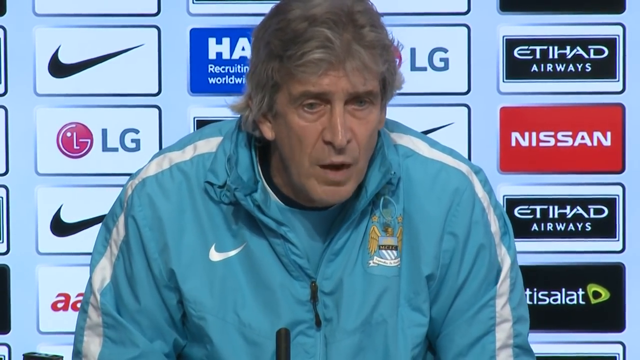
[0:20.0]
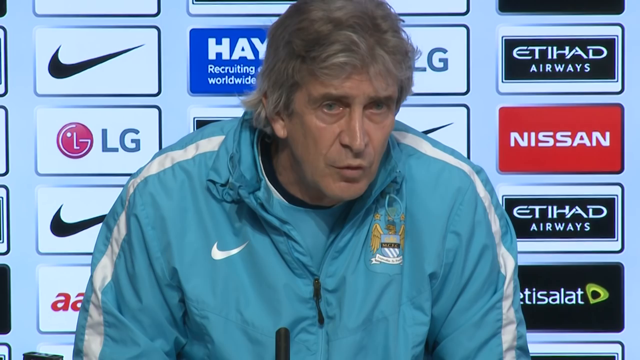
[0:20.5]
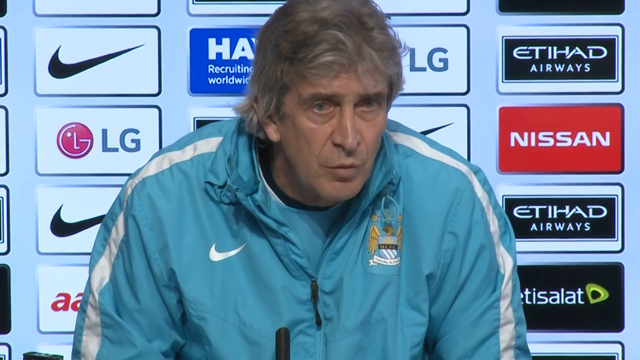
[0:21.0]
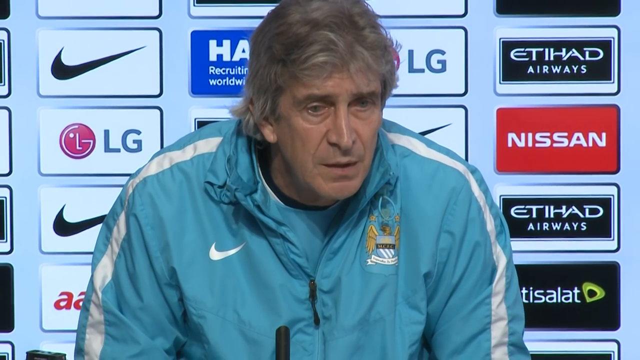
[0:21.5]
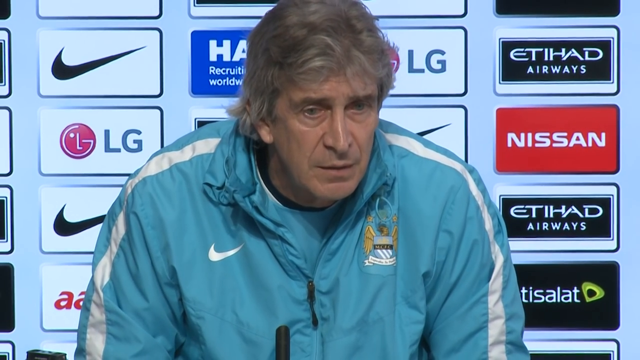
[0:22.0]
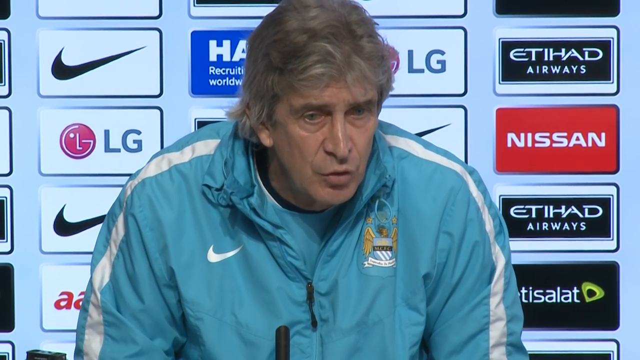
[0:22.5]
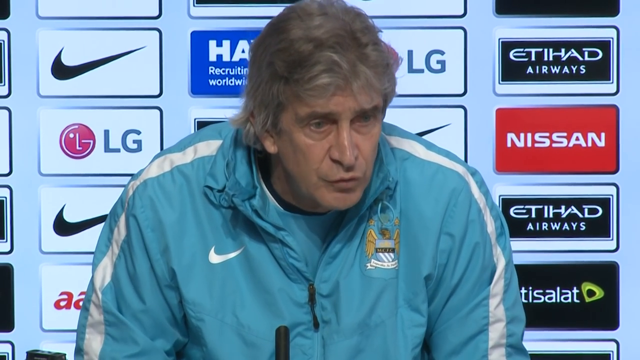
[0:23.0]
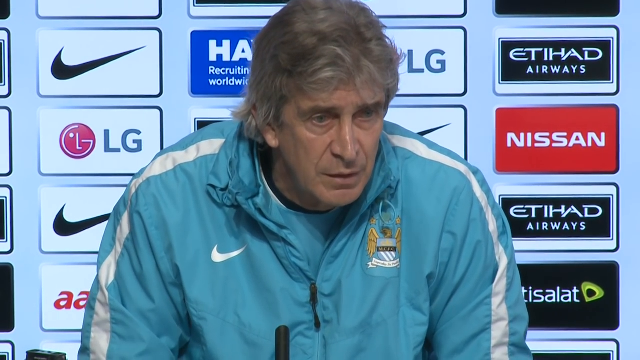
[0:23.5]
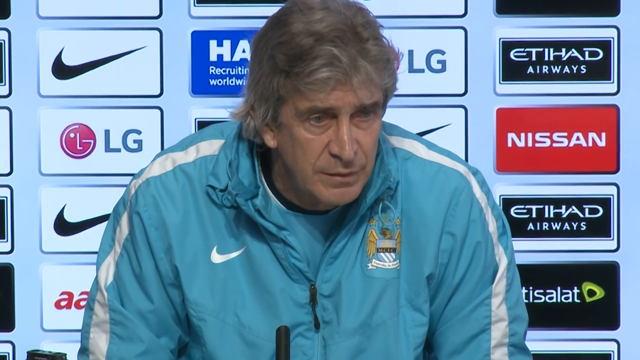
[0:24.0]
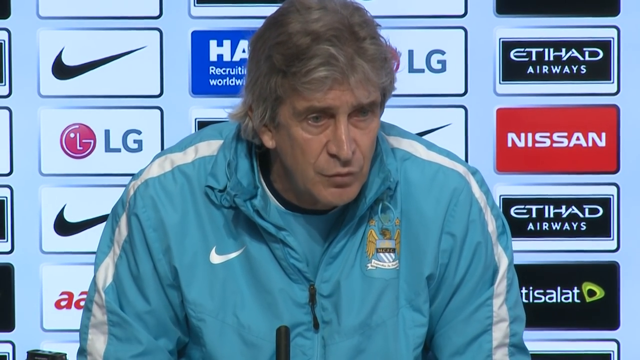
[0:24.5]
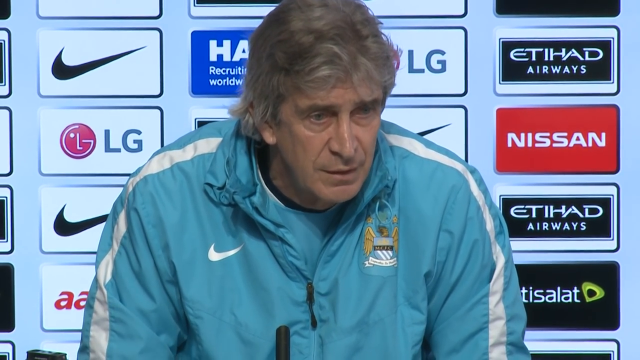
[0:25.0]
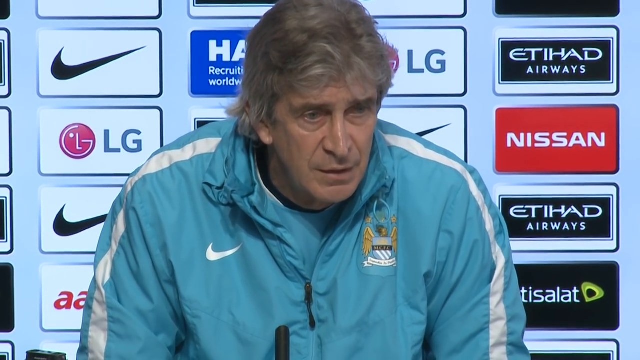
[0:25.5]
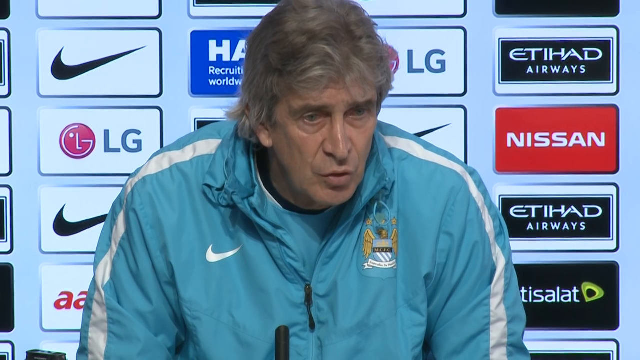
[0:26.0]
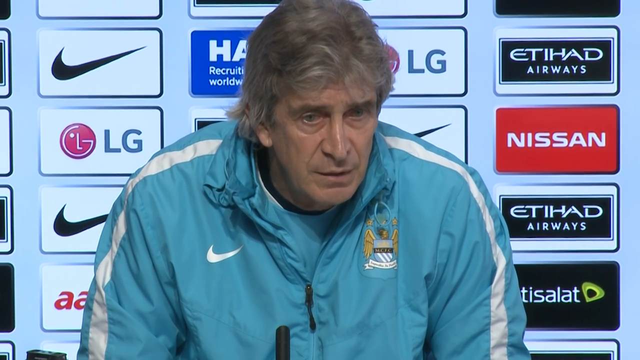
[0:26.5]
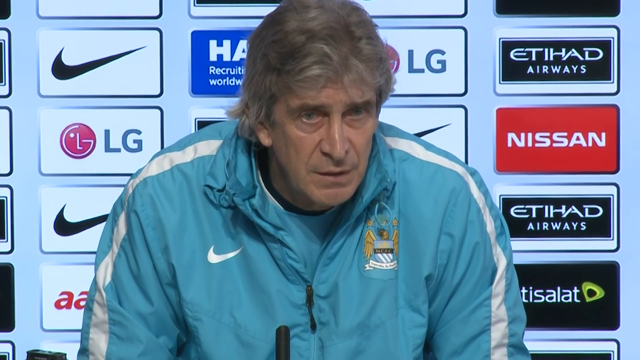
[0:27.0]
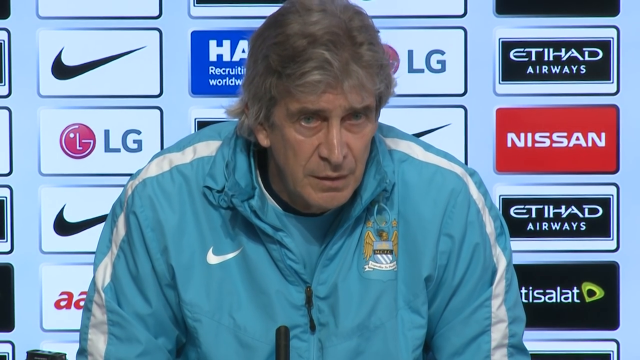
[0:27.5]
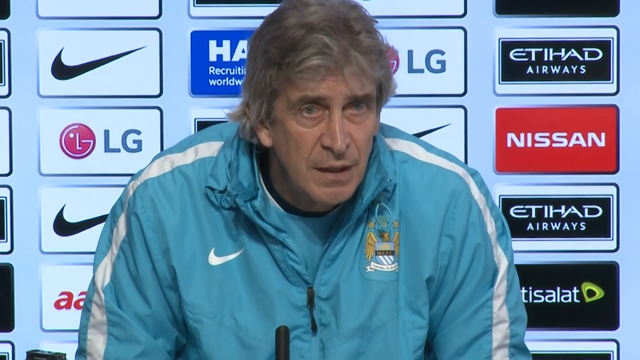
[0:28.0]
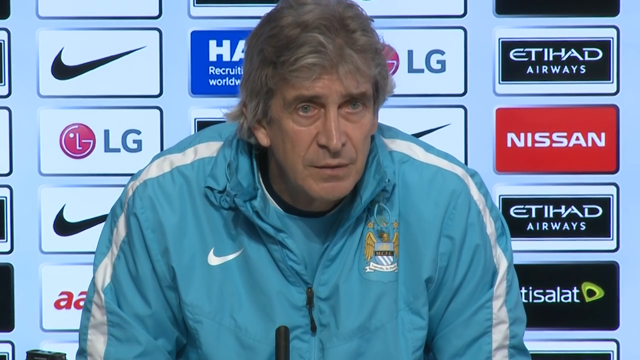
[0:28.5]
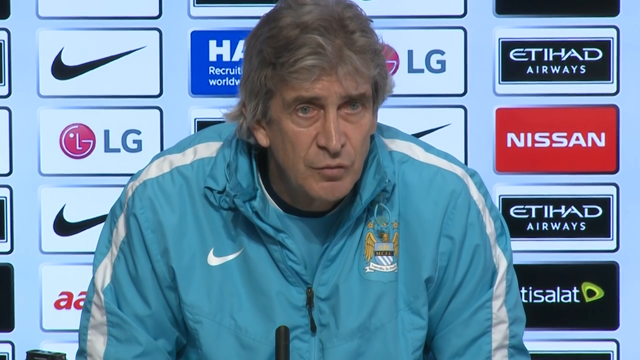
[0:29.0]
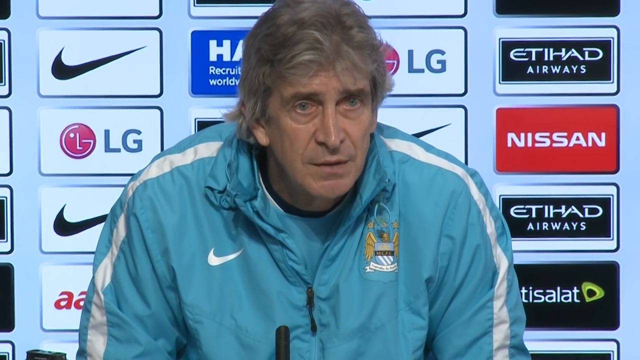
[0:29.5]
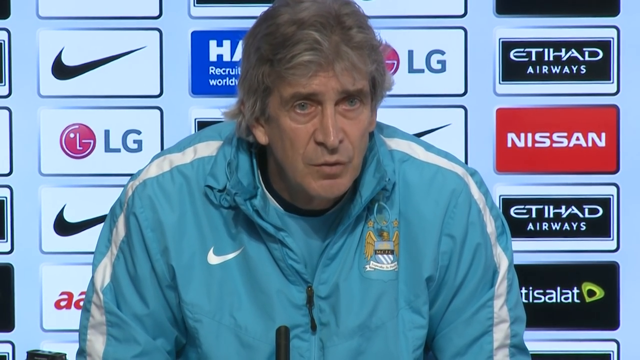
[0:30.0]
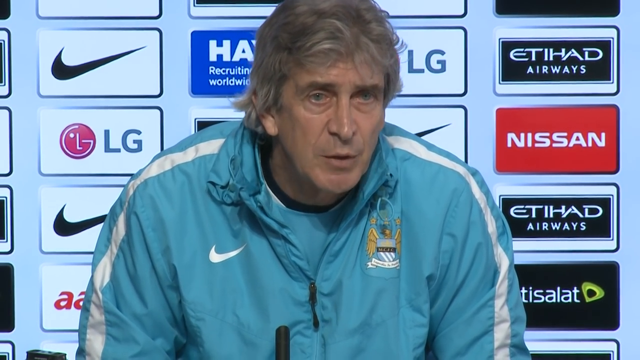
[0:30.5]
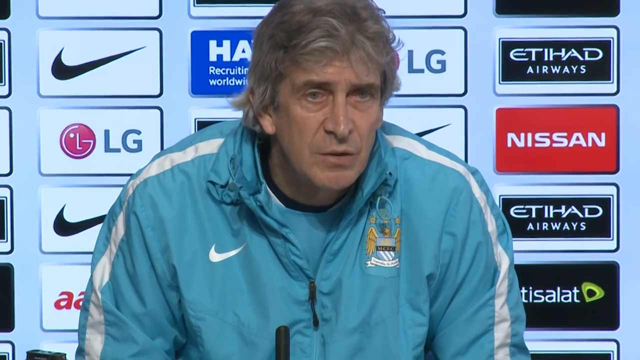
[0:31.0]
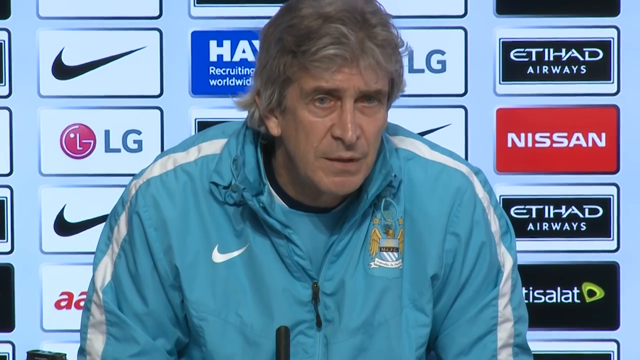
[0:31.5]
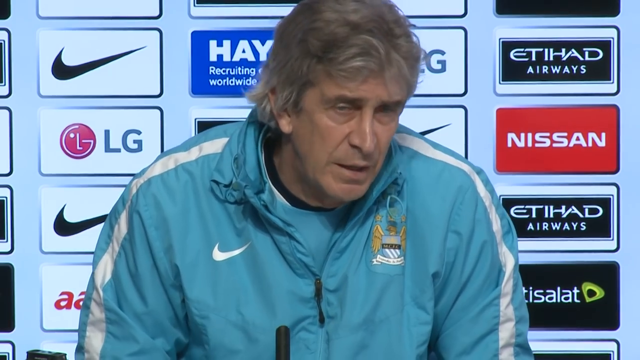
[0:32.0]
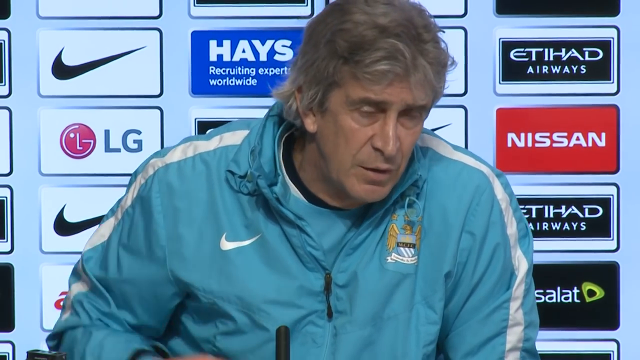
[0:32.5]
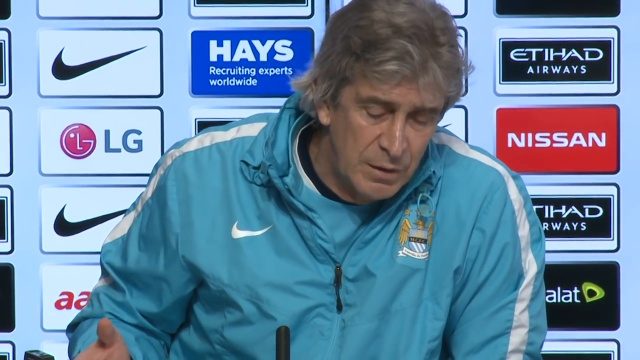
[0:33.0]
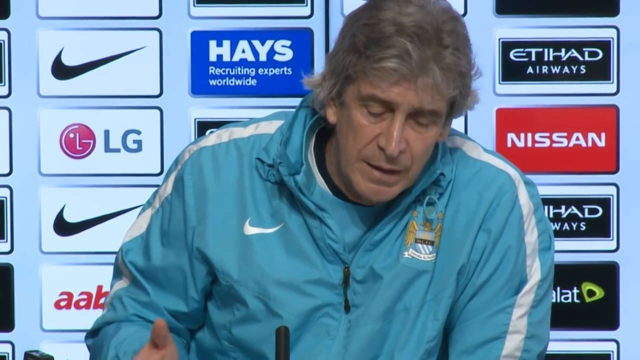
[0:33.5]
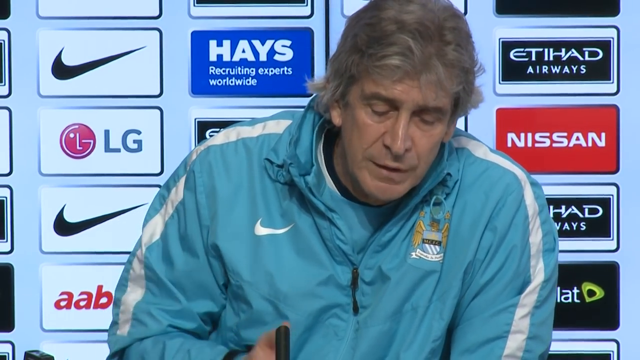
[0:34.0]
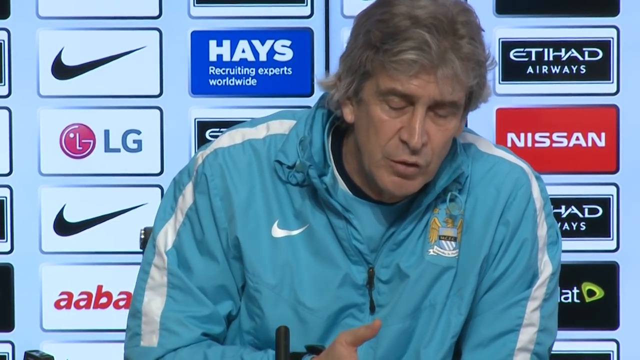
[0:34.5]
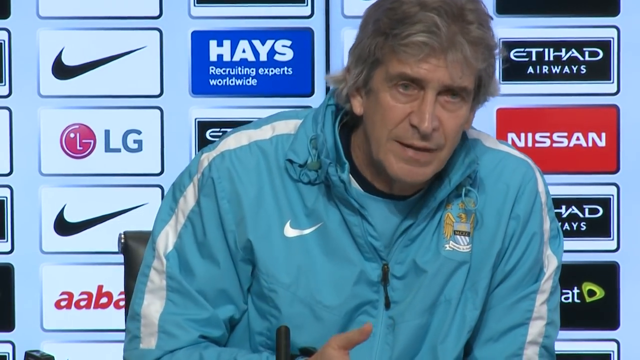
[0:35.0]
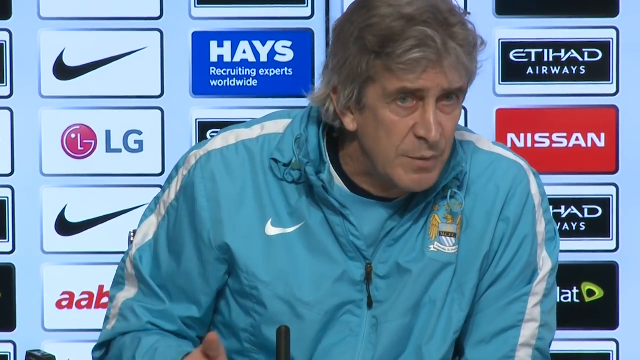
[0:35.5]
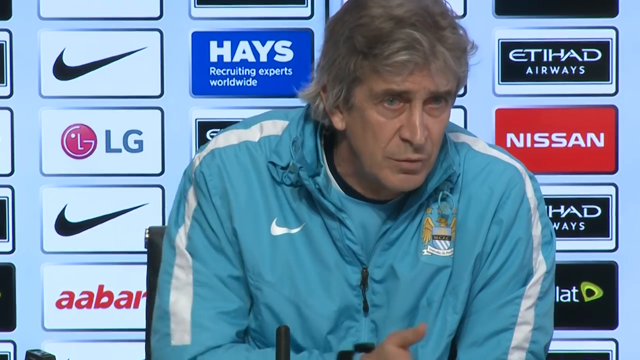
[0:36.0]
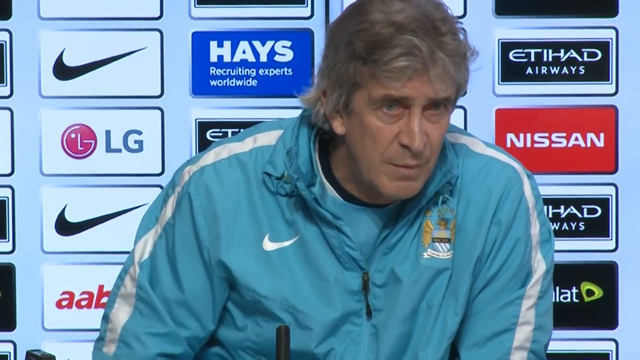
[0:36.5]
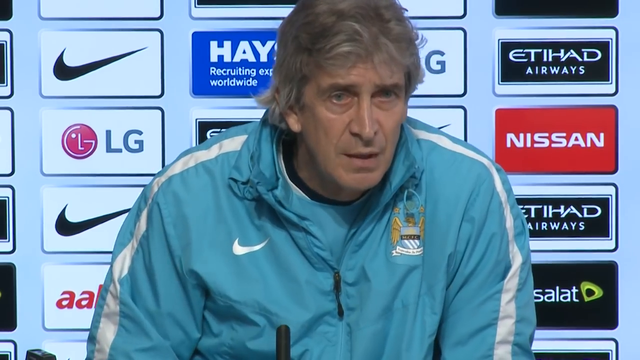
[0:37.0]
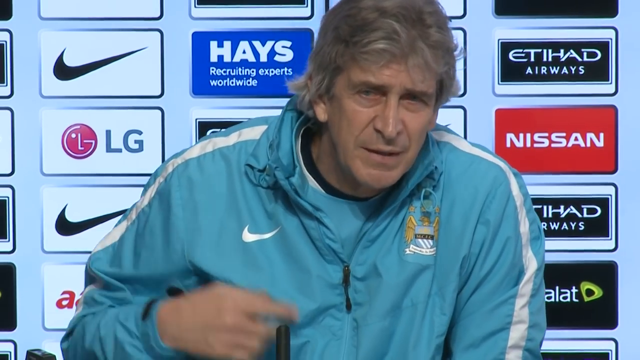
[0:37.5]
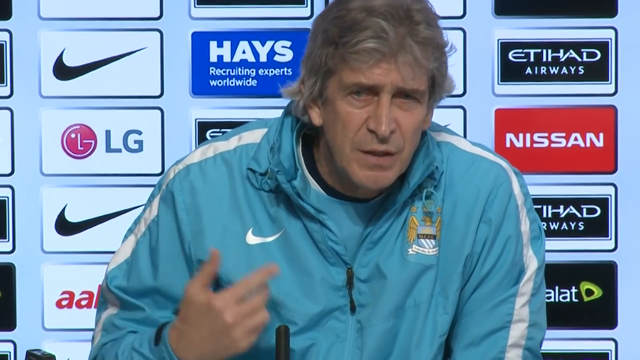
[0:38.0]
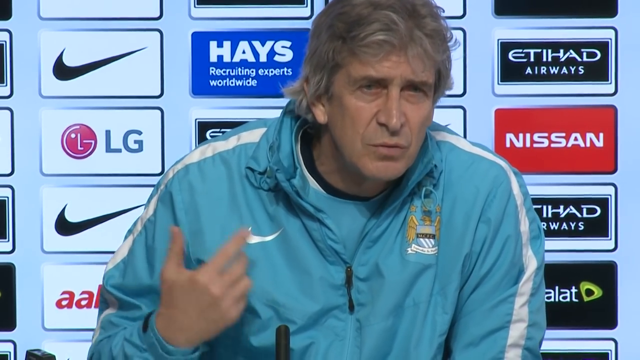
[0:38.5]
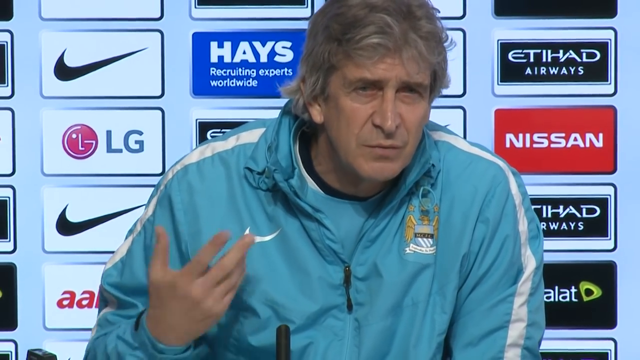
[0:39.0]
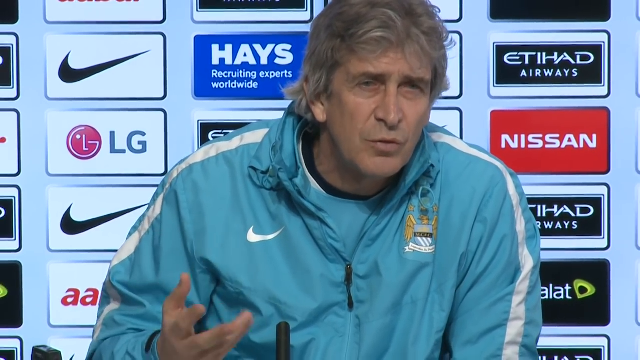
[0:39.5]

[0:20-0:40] A man in a light blue sports jacket faces the camera and speaks, a little hunched forward. A Nike swoosh is on his right breast, white stripes run down each side, and some sort of coat of arms is on his left breast. He is sitting in front of a grid of logos that includes multiple black Nike swooshes, an LG logo and Nissan. As he speaks, he very lightly nods his head forward by jutting out his chin a little. He then begins shaking his head no, closing his eyes as if looking down so his eyes are no longer visible. He swivels a little on his chair, looks up and makes eye contact with the camera again, and shakes his head more rapidly in many small shakes. He squints, then gestures with his open right hand, moving it in a circular motion.